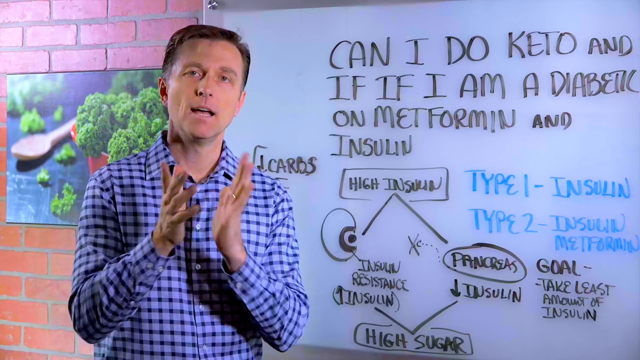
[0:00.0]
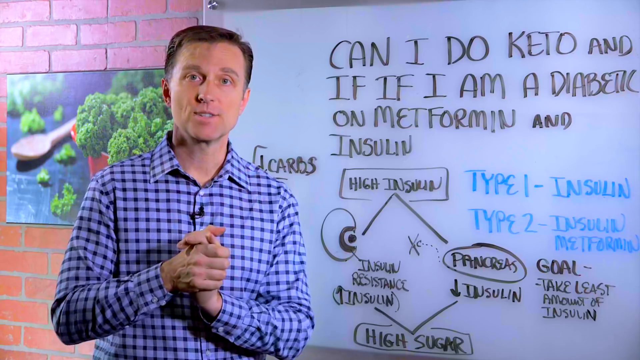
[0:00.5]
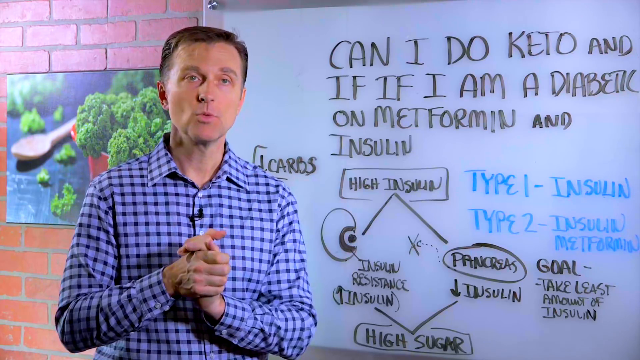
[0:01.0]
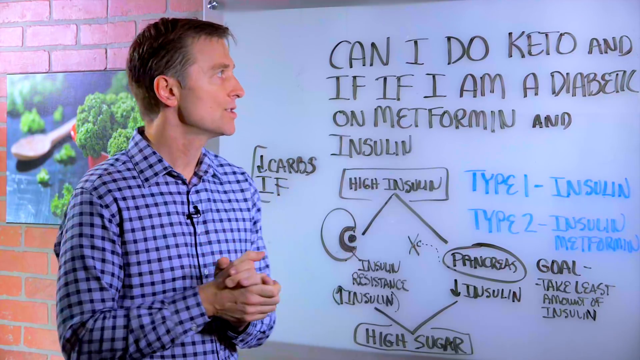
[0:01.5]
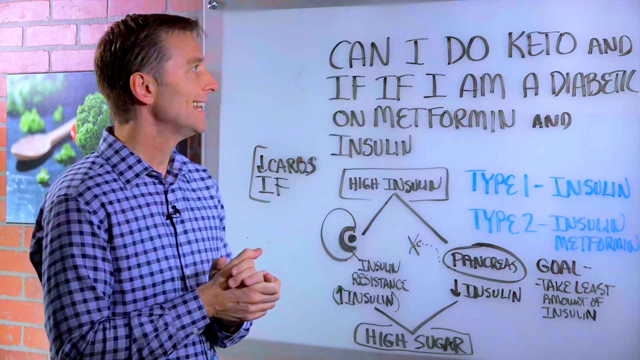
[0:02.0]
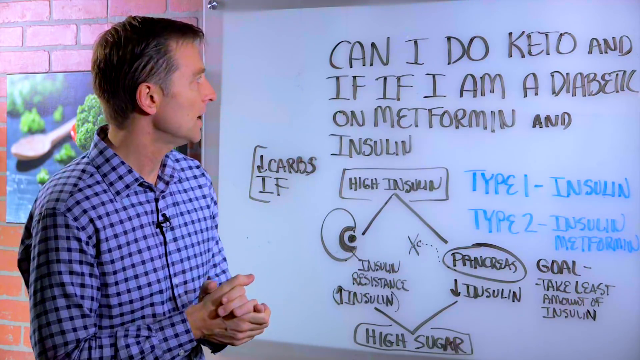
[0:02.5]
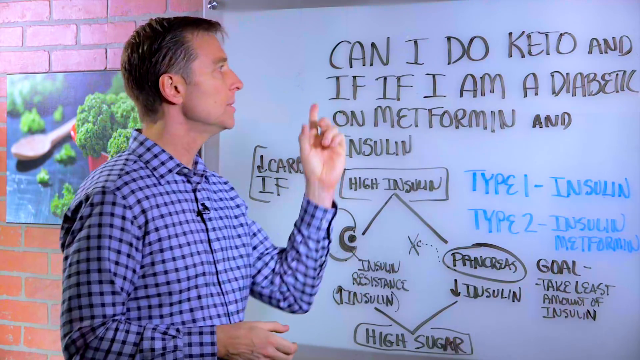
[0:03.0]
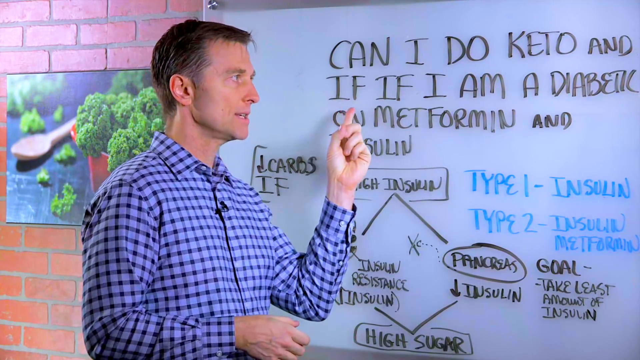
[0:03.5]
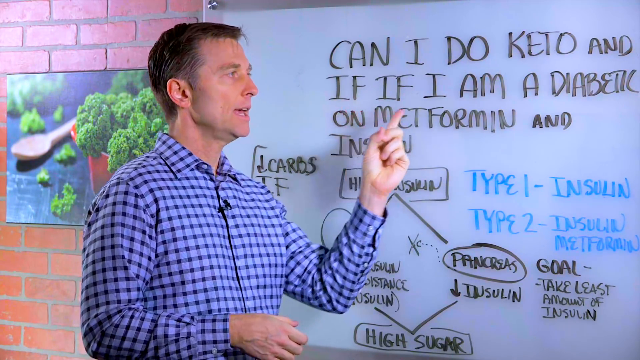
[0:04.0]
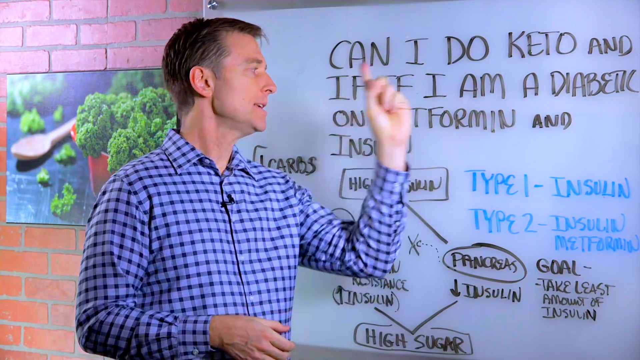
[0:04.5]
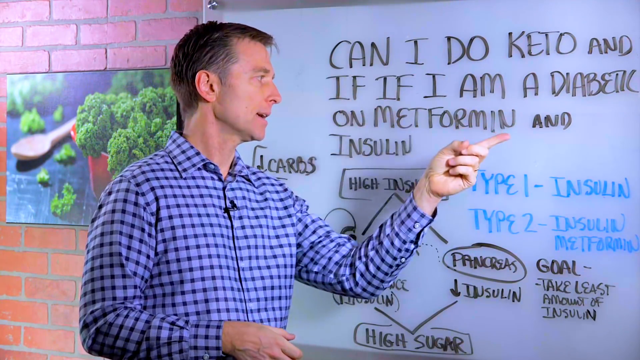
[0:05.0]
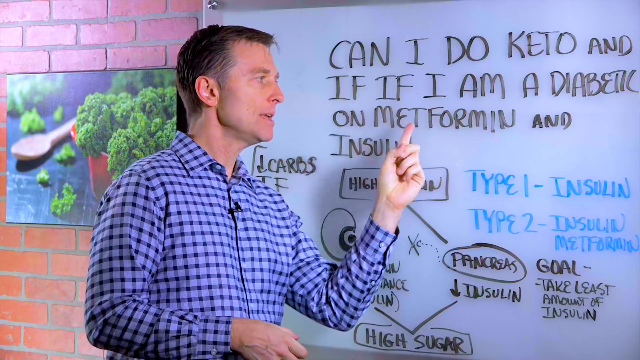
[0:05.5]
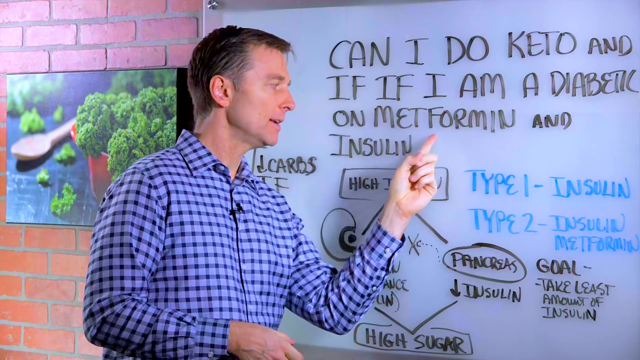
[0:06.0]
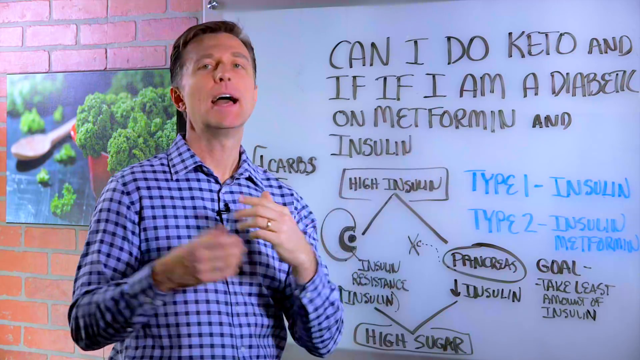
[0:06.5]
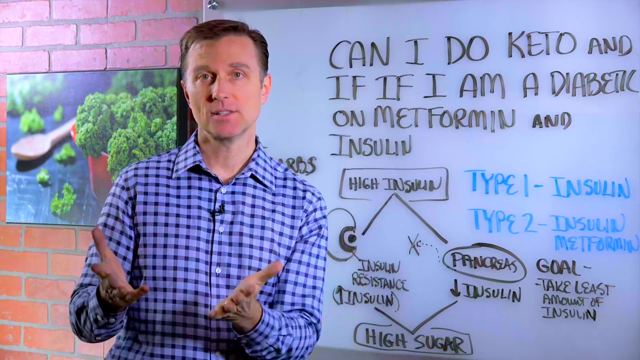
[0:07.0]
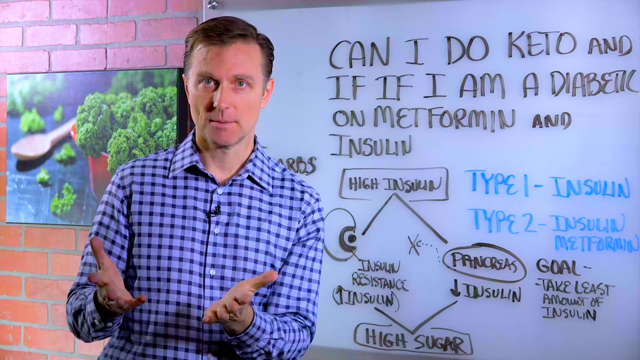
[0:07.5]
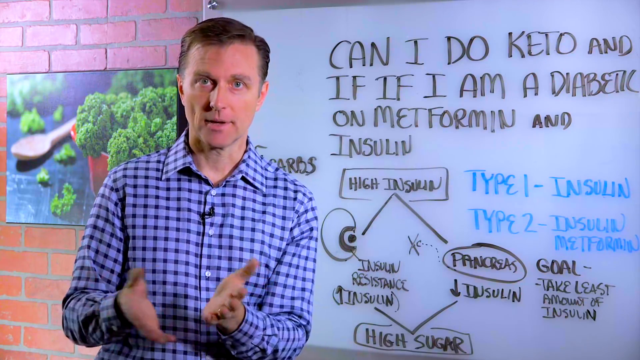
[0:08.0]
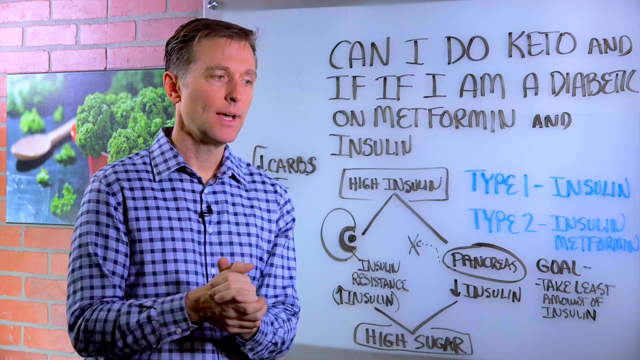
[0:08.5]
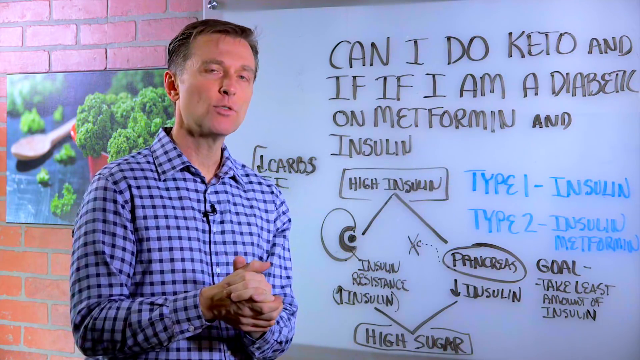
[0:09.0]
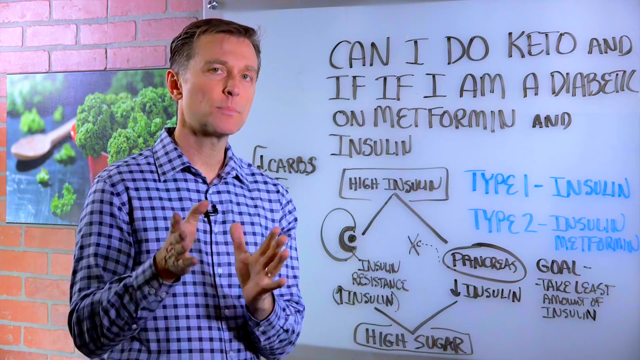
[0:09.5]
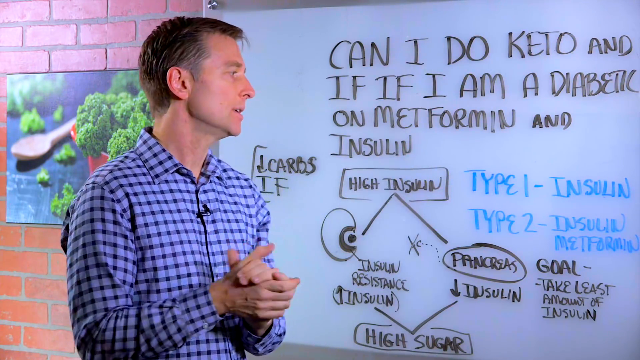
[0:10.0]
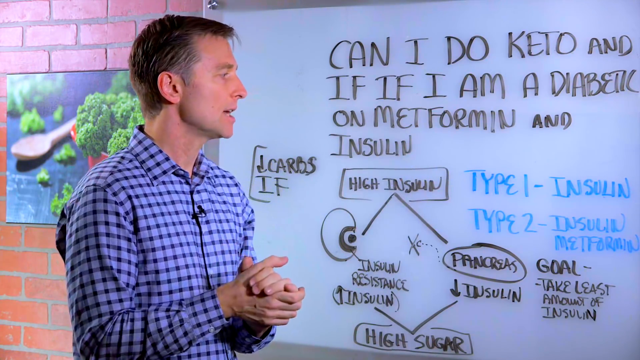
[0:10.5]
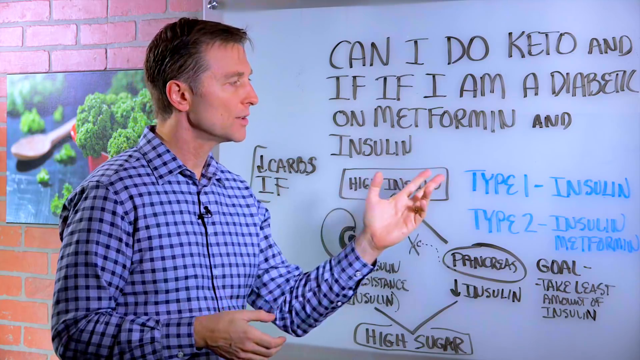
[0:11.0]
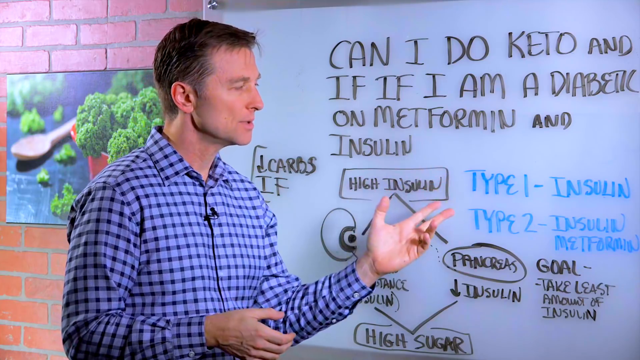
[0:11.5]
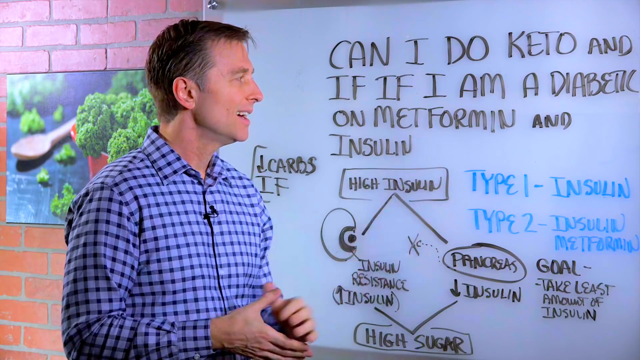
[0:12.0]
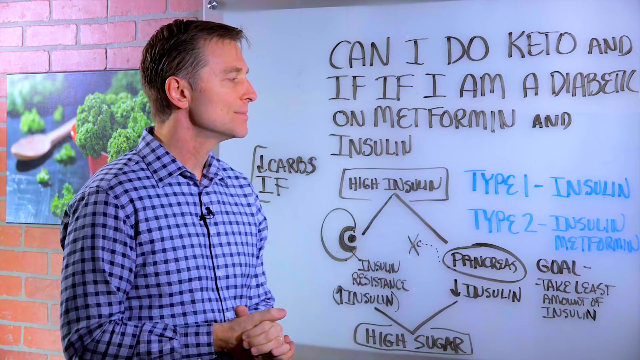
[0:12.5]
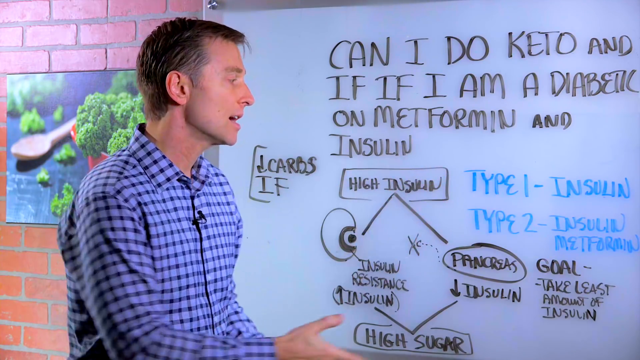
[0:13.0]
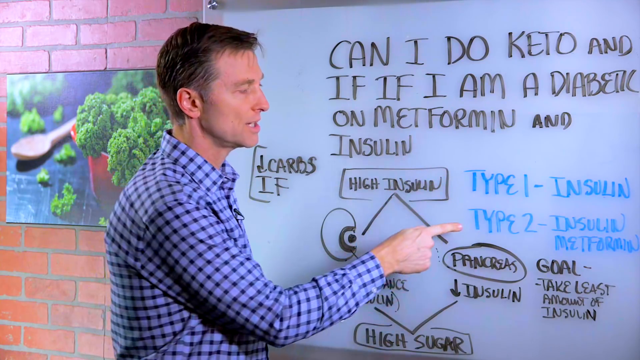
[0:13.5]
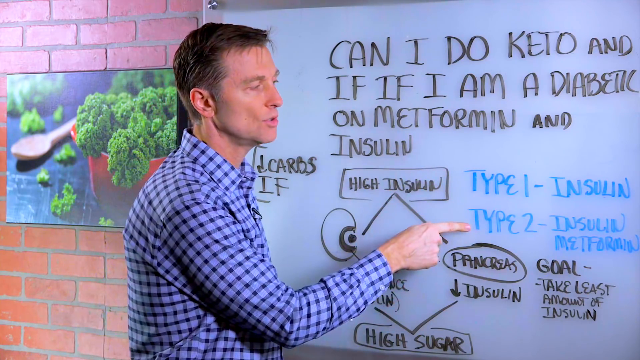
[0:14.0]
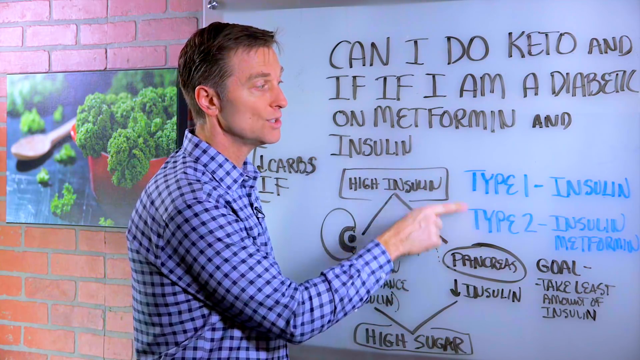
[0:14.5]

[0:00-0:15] A man in a plaid shirt stands at a board whose writing reads "can I do keto" and "if I am a diabetic on metforin and insulin." In blue it says "type 1 insulin type 2 insulin metaforin." There is a diagram about different types of high insulin and the pancreas, involving high sugar, insulin going up, and insulin resistance; it apparently relates to being diabetic. A picture in the background looks like green vegetables. The information appears to be written on a whiteboard. The man talks and points to the information, including type 2 and type 1.